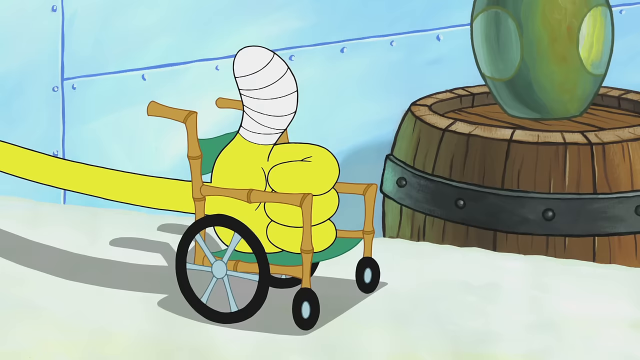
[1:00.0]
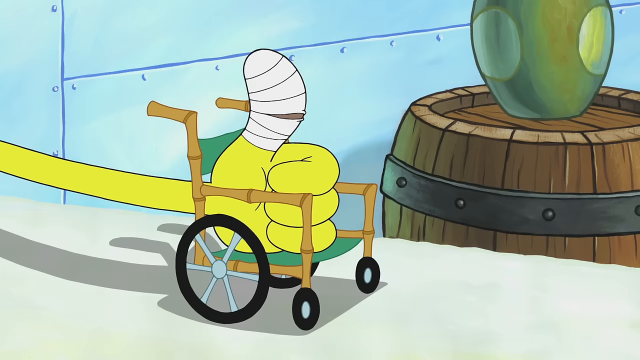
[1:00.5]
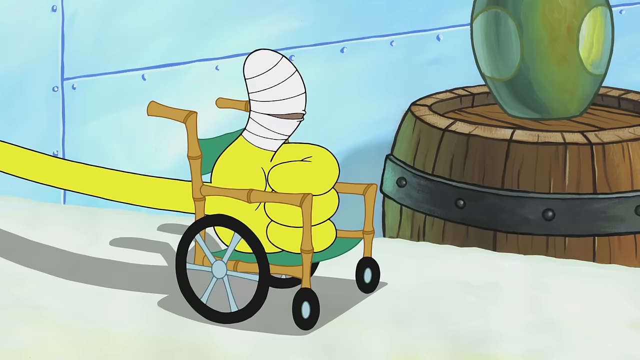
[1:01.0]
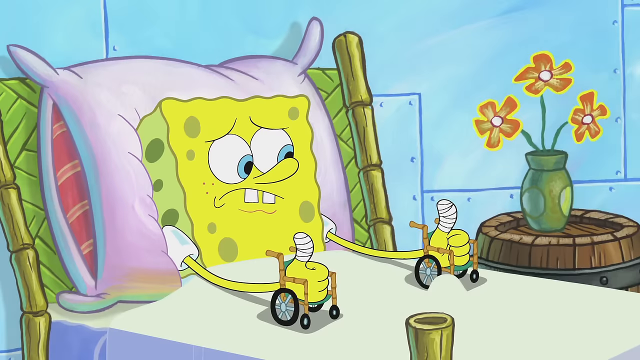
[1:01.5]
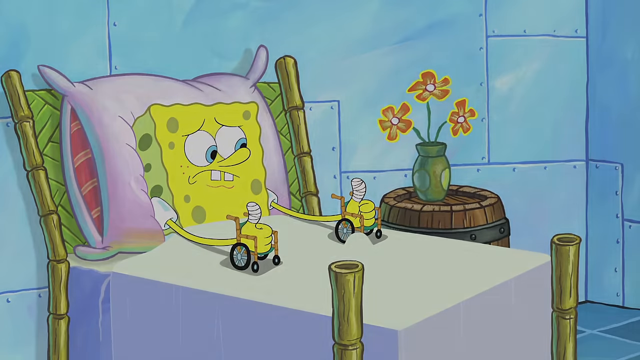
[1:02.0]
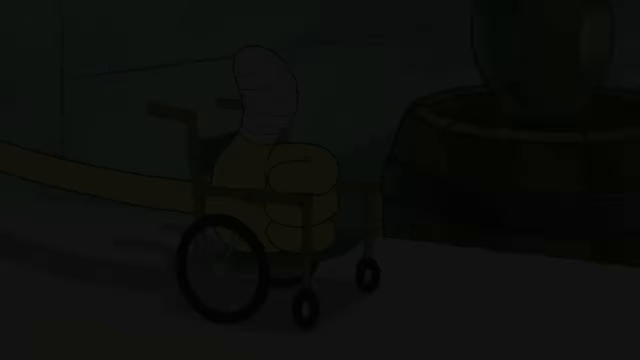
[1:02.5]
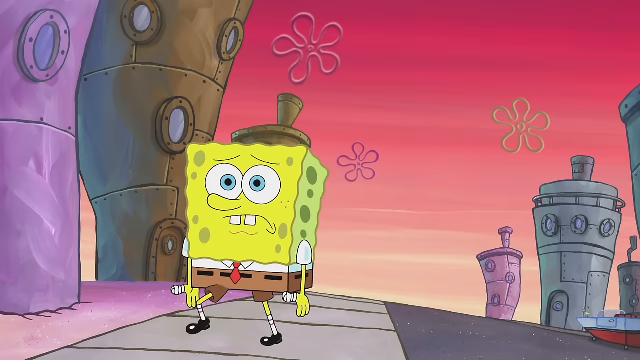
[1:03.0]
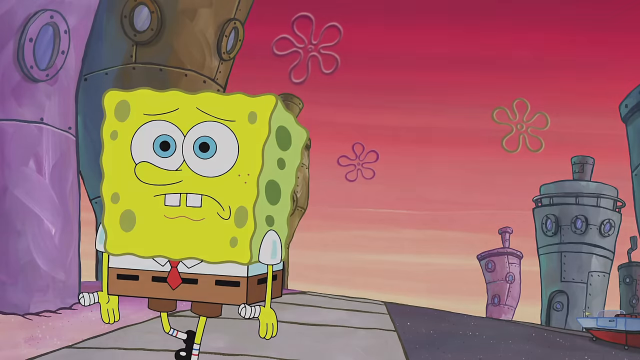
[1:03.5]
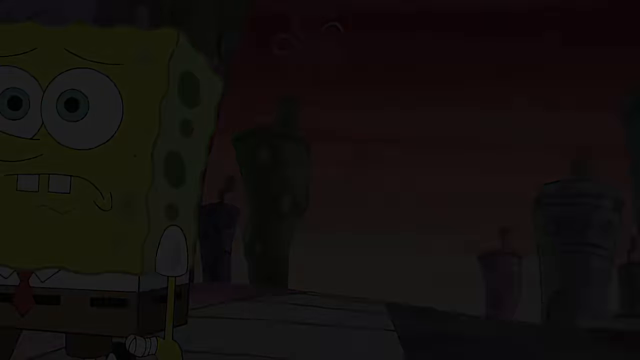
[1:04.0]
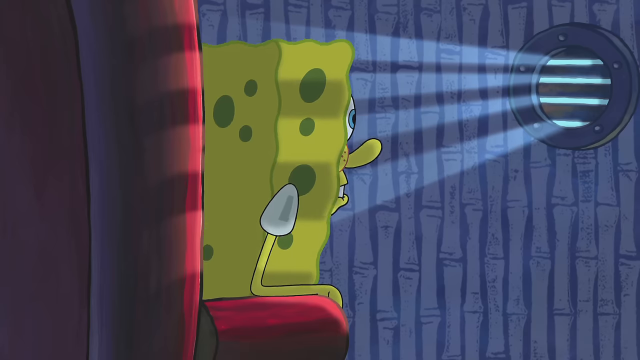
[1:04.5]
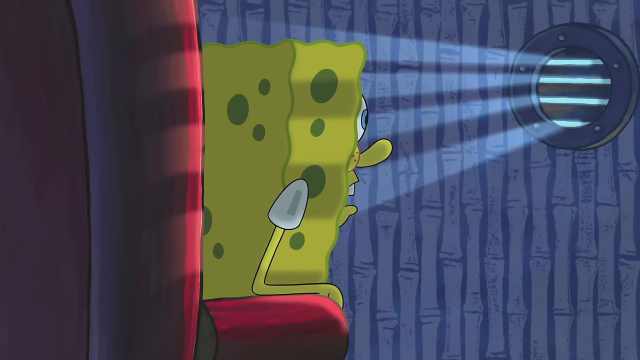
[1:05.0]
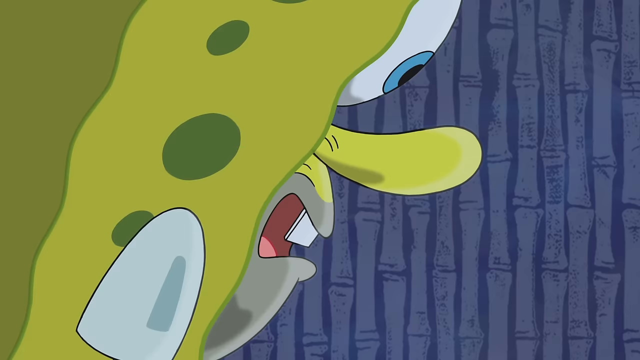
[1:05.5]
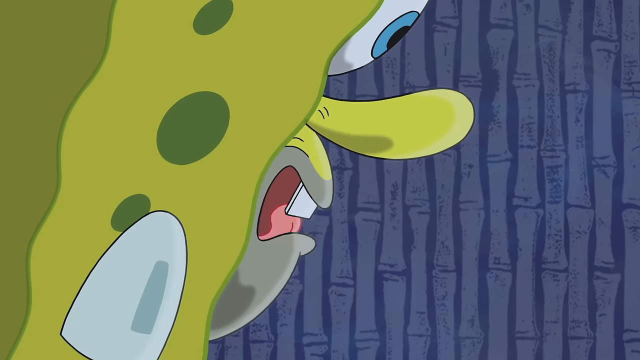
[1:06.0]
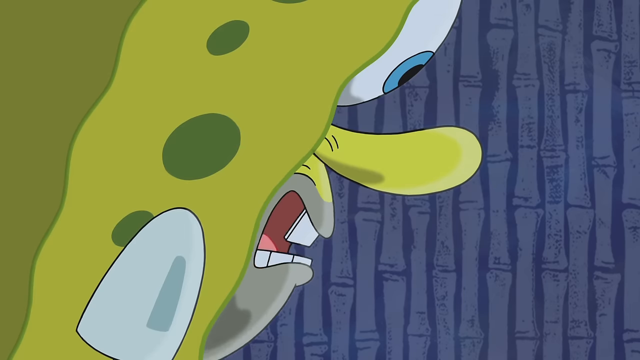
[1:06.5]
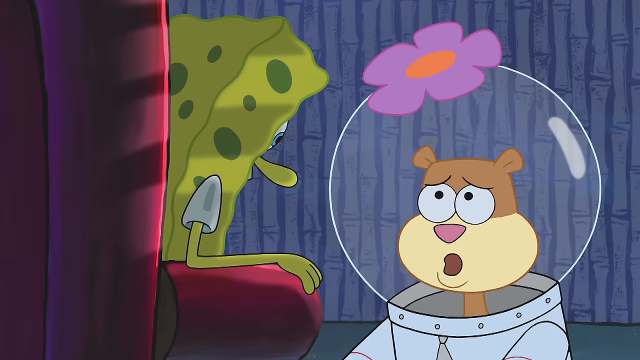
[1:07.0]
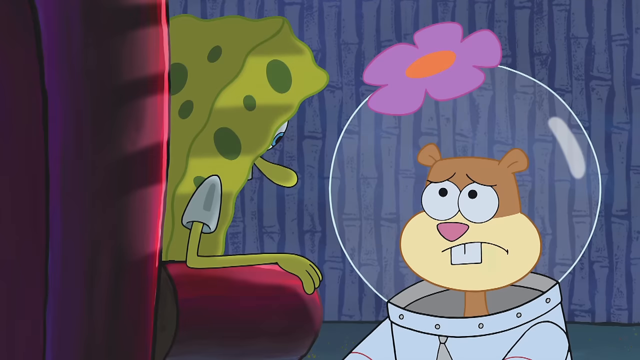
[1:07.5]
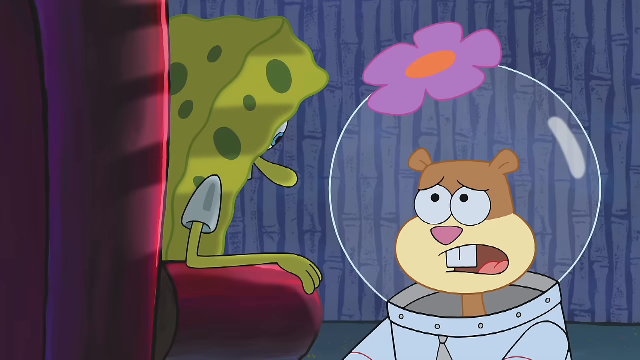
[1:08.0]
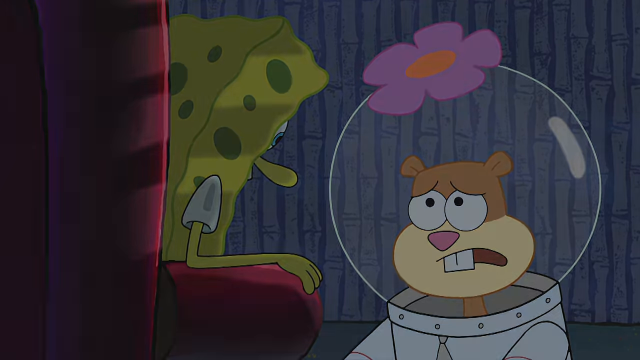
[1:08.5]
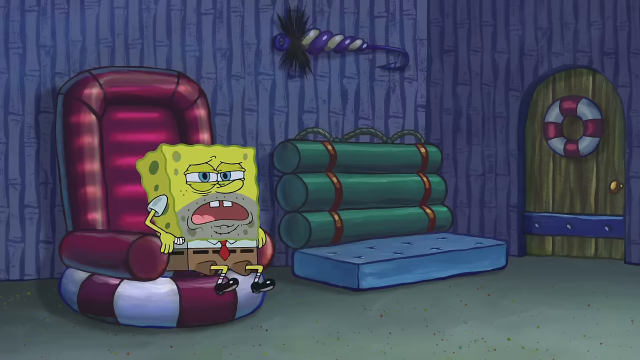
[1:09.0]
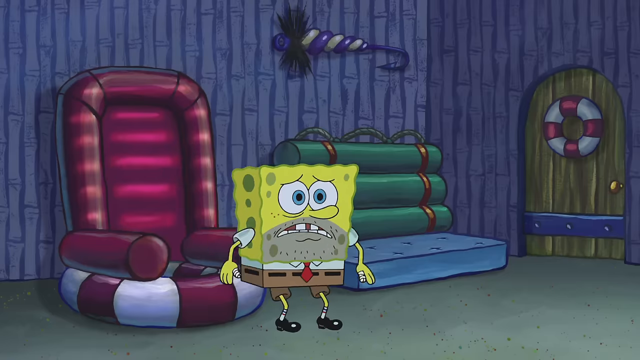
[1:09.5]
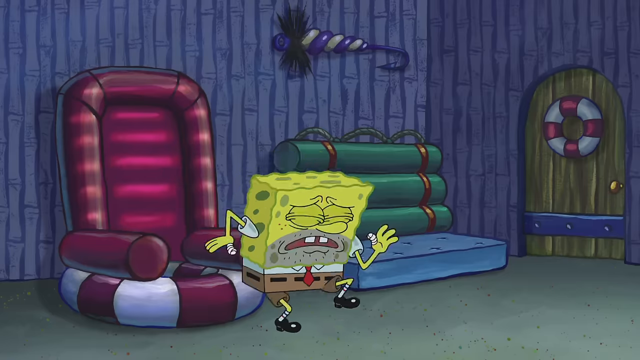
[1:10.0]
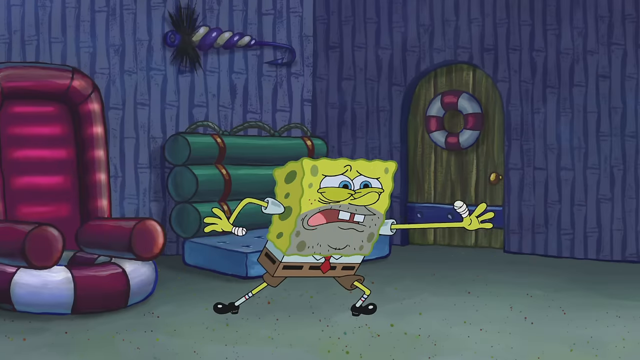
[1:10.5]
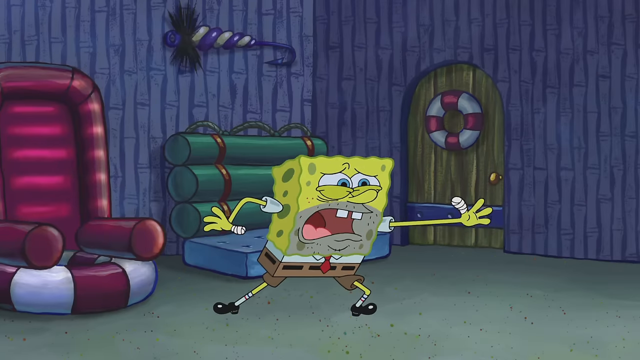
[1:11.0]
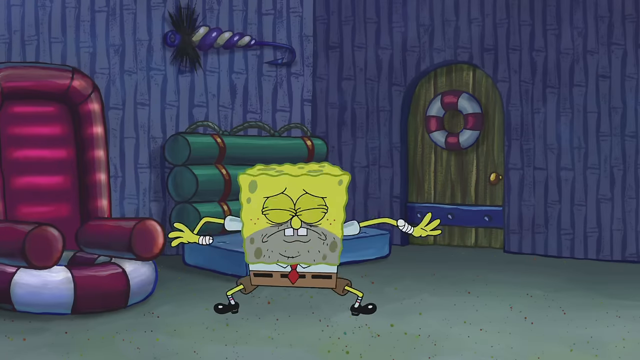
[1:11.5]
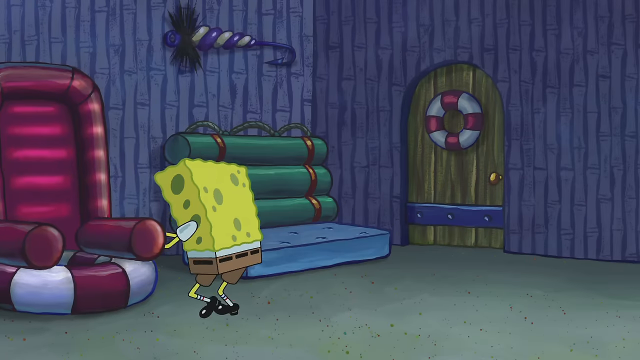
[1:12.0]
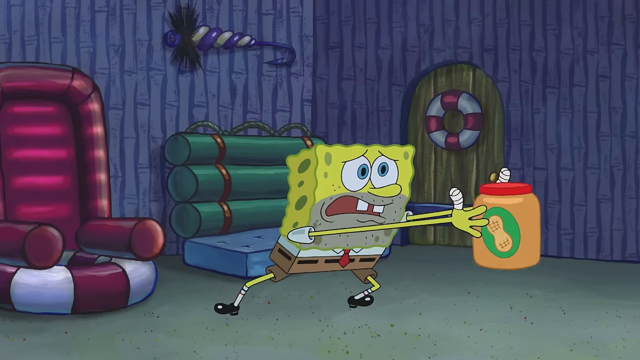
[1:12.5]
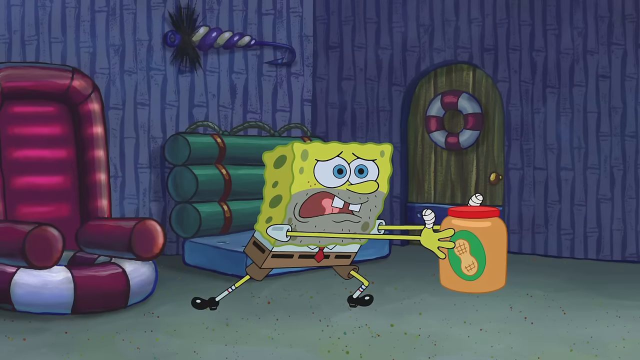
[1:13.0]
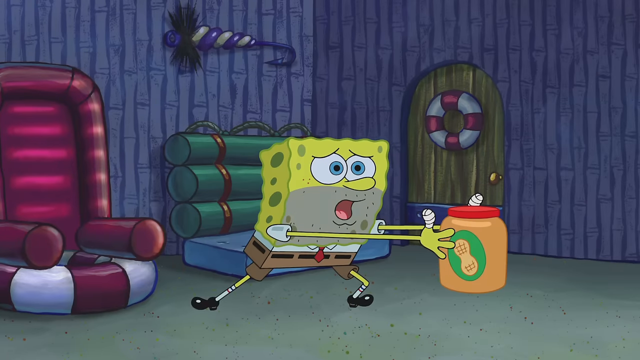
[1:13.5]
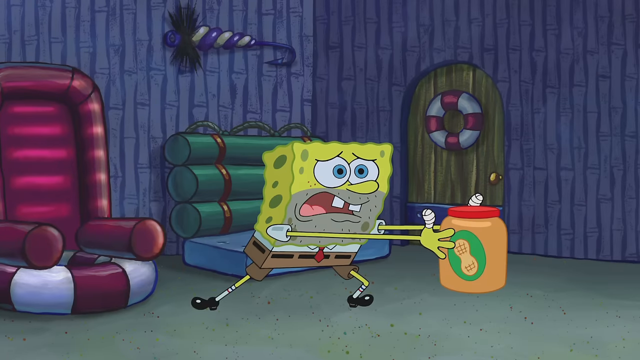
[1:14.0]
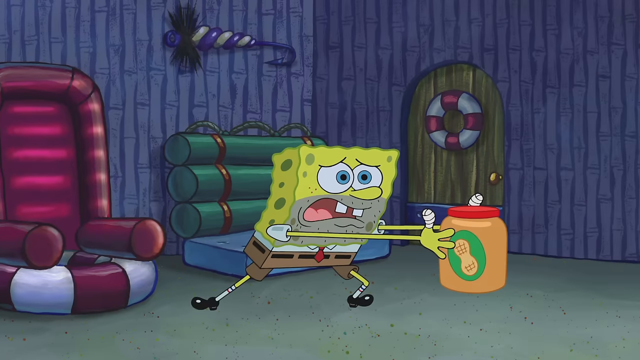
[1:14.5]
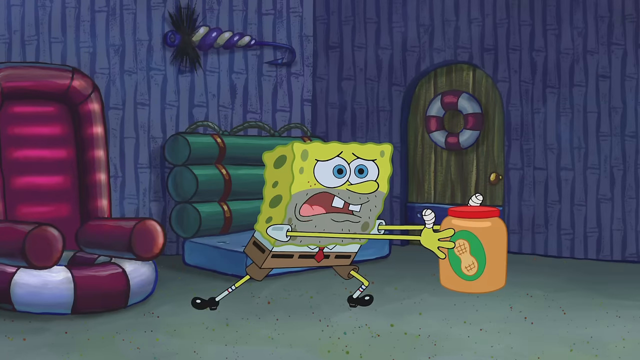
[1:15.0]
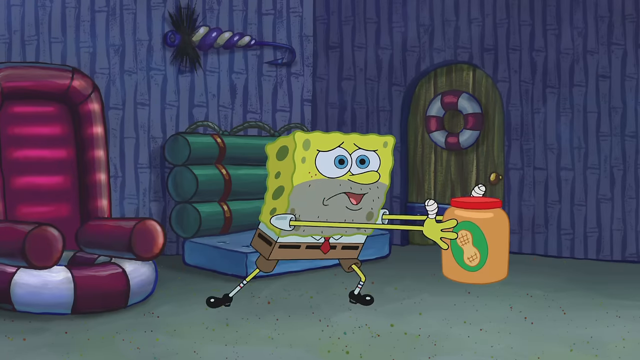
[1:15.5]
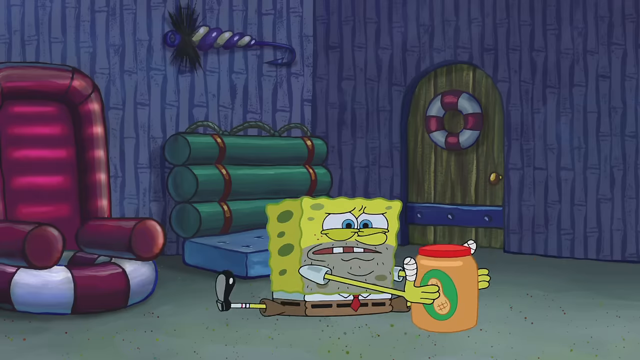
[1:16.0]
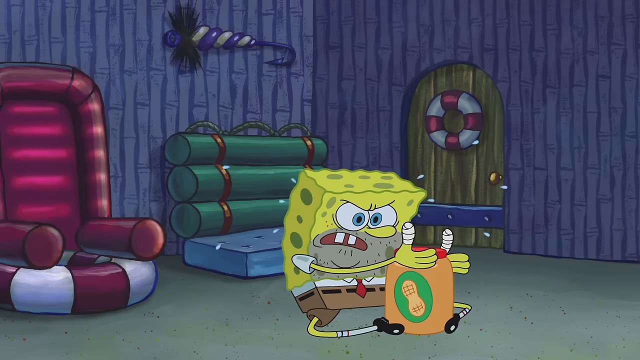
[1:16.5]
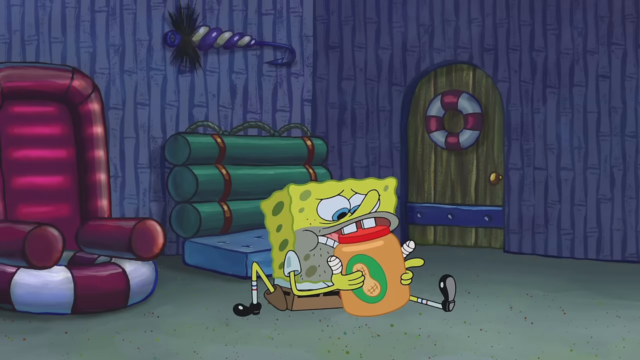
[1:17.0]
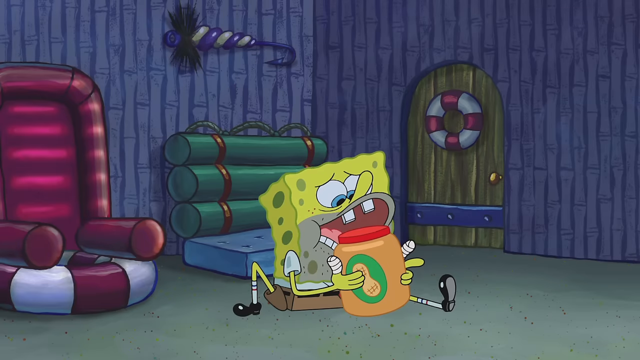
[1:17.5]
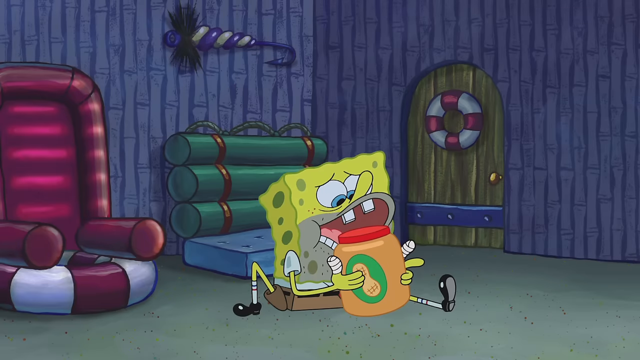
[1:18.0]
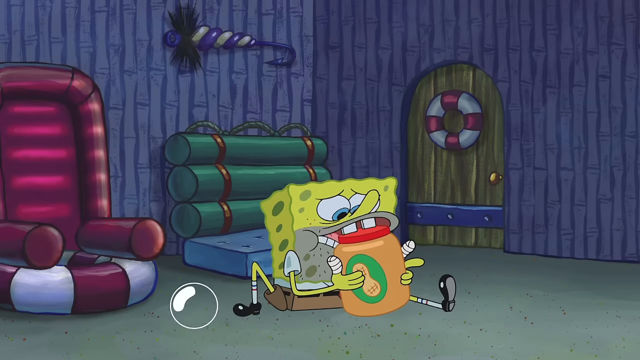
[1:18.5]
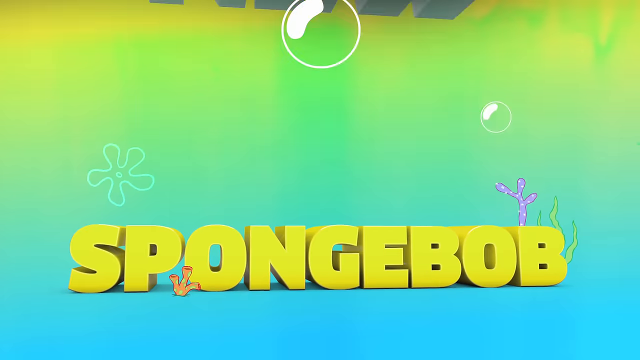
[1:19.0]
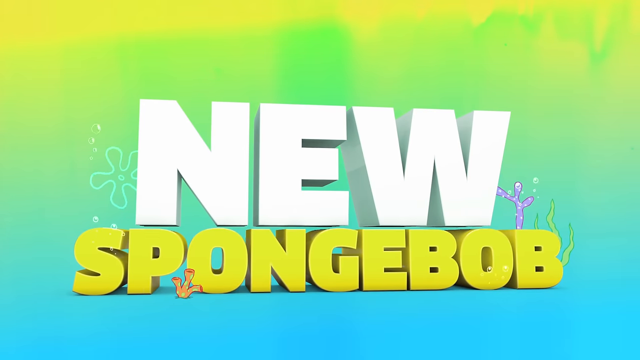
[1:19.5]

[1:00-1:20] A wheelchair is shown, its back and bottom rests green and its black tires with silver rims. His thumb coughs and releases fluids. The scene fades to black, and SpongeBob walks down the street with both thumbs taped up. Inside his home, SpongeBob sits on a couch with his beard area grayed out, speaking to Sandy, who kneels in front of him. SpongeBob gets up from the couch, stretches his hands out in front of him and turns around to take out a jar with a peanut label on the side and a red lid. He keeps speaking with the jar in his hands, then falls to the floor, struggling to open it, and tries to bite the lid with his teeth. A series of bubbles floats up into the air as a transition, and block letters fall to reveal the phrase "New Spongebob".